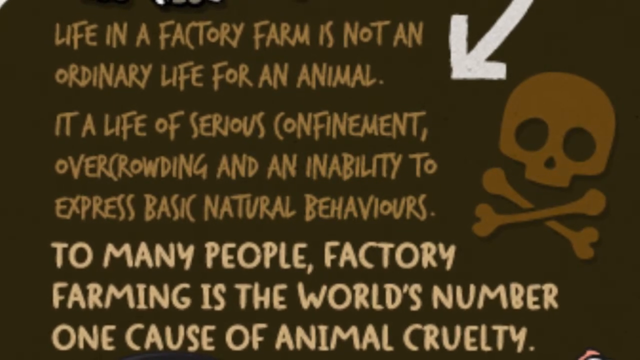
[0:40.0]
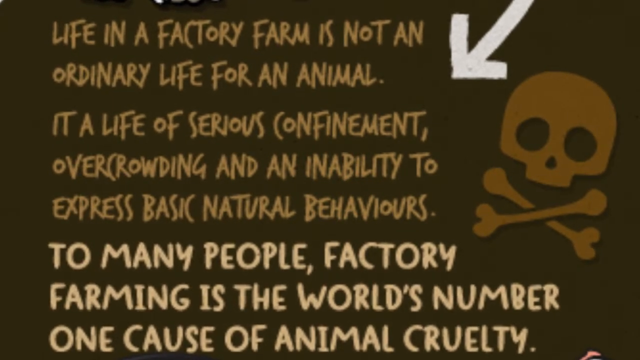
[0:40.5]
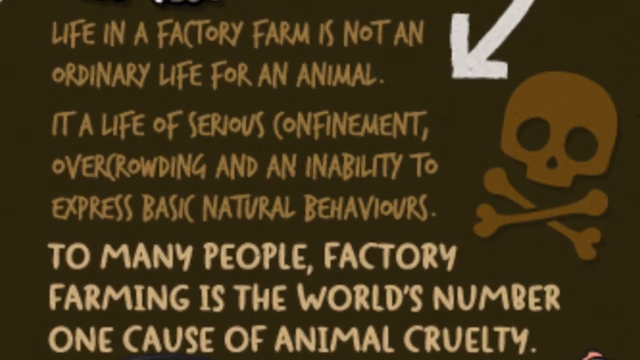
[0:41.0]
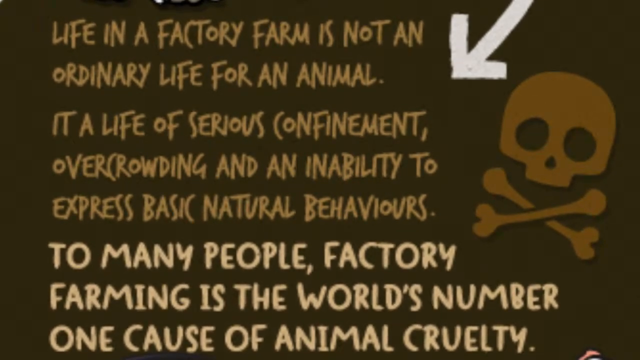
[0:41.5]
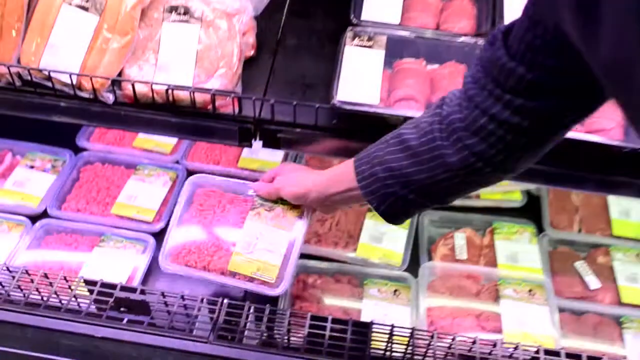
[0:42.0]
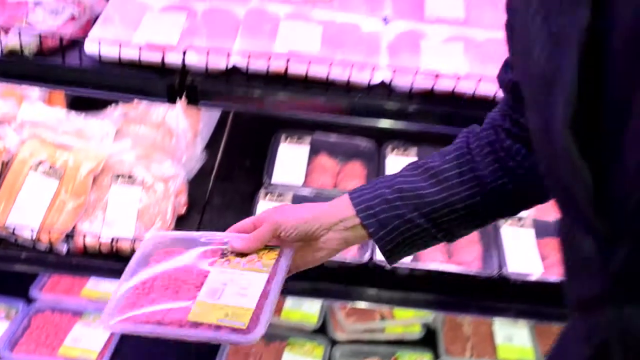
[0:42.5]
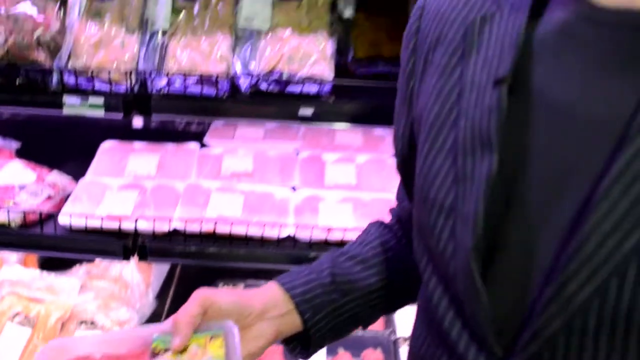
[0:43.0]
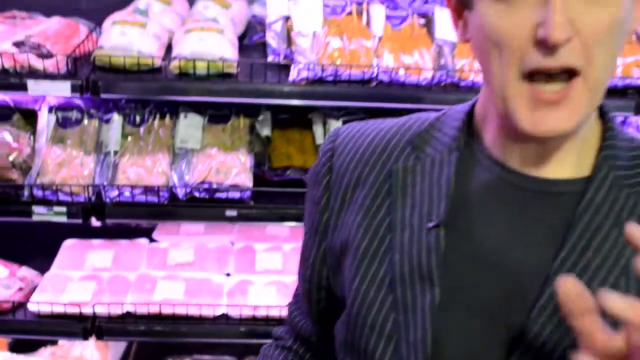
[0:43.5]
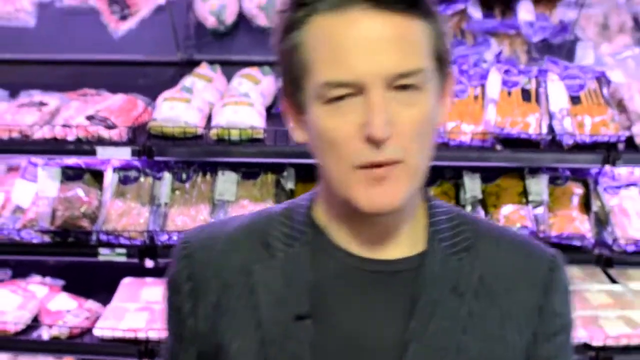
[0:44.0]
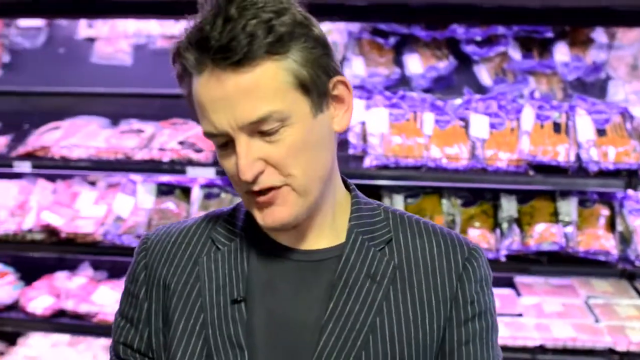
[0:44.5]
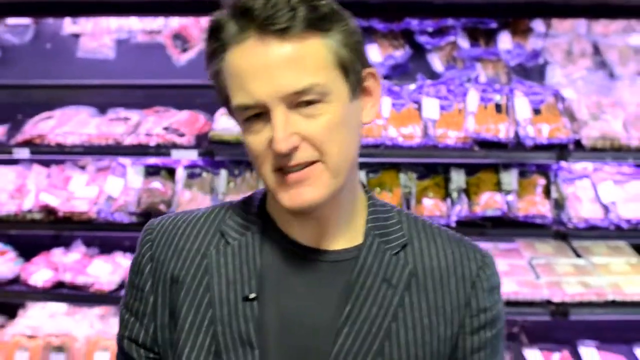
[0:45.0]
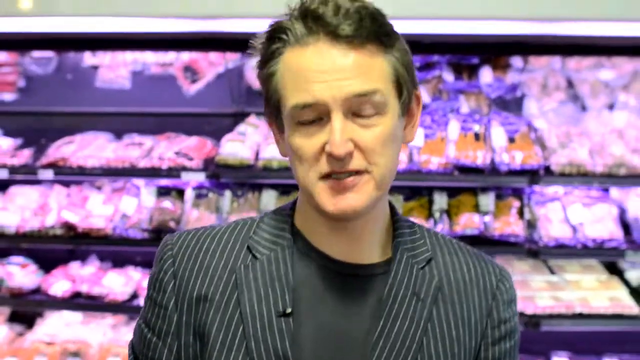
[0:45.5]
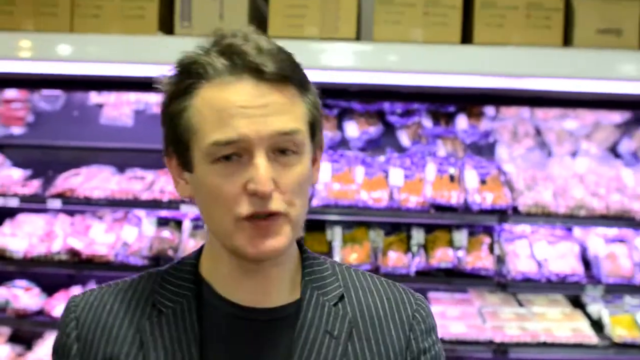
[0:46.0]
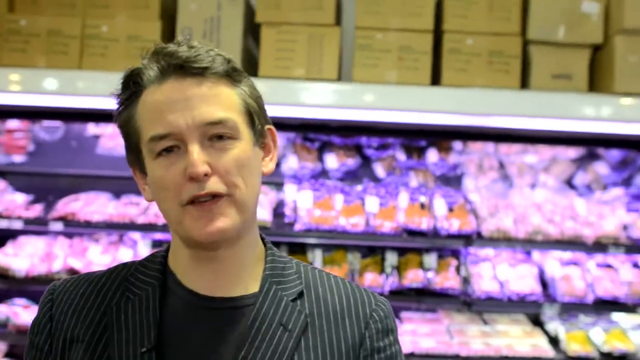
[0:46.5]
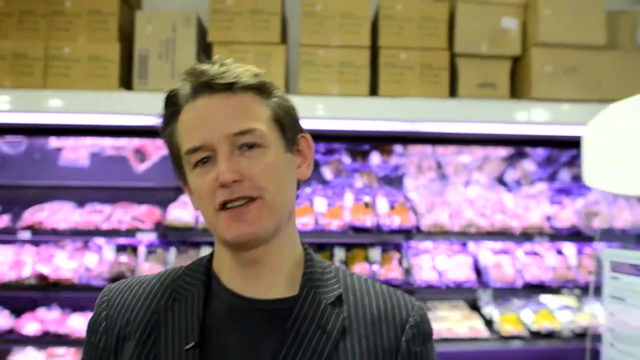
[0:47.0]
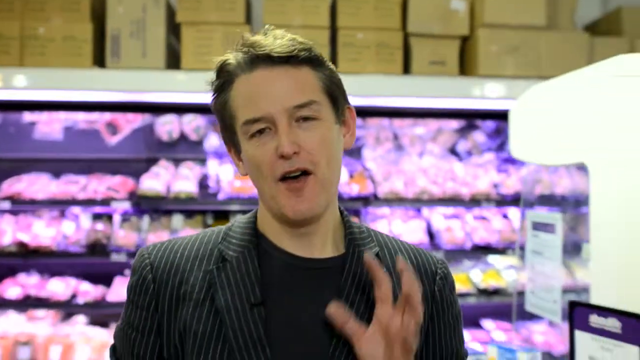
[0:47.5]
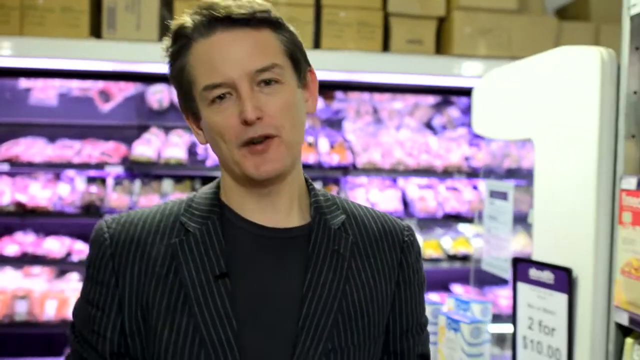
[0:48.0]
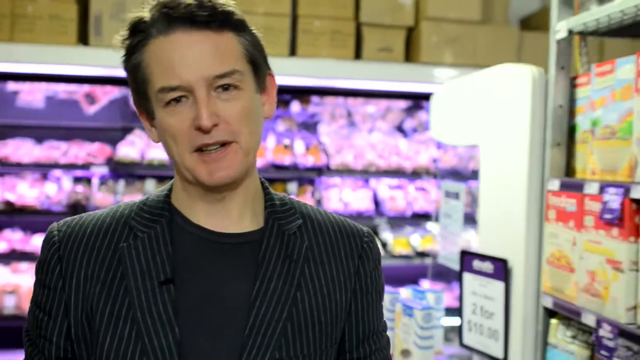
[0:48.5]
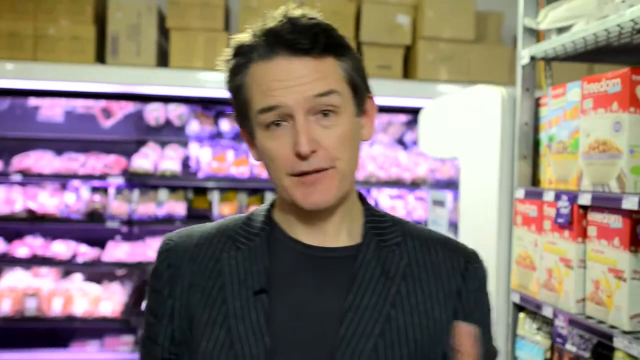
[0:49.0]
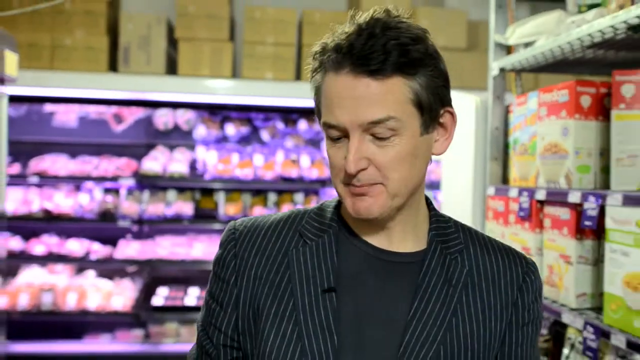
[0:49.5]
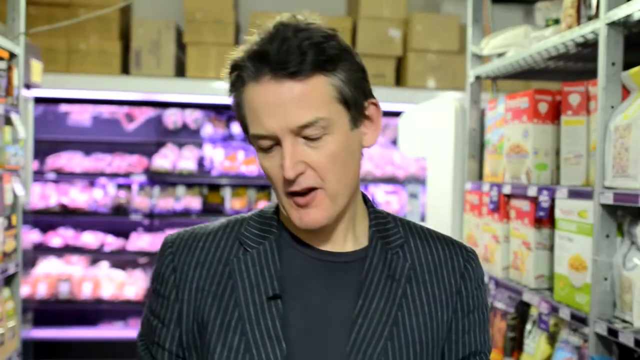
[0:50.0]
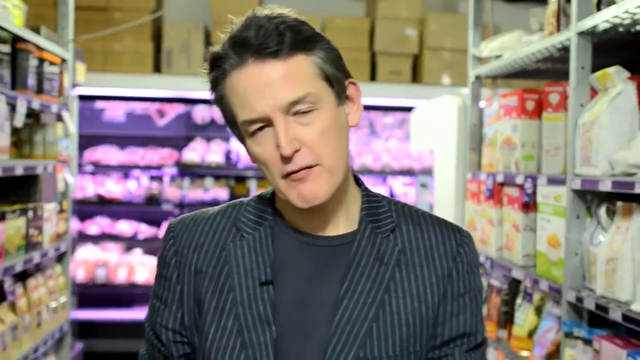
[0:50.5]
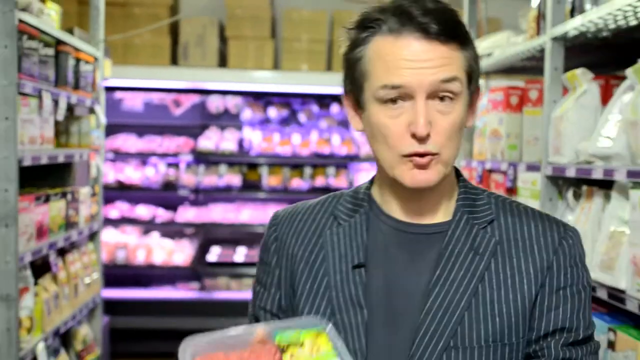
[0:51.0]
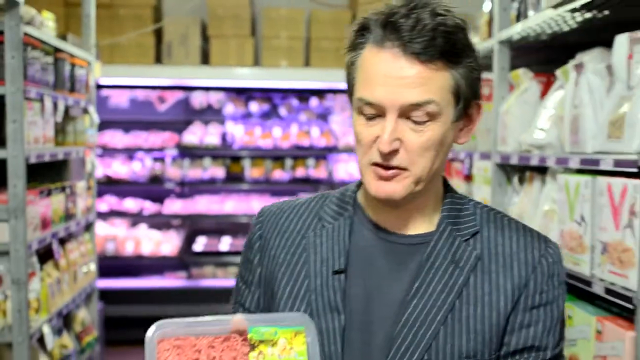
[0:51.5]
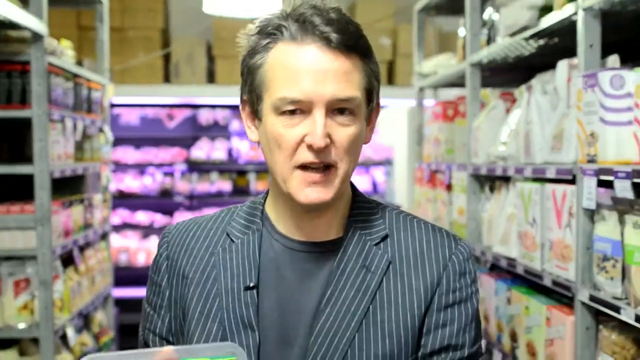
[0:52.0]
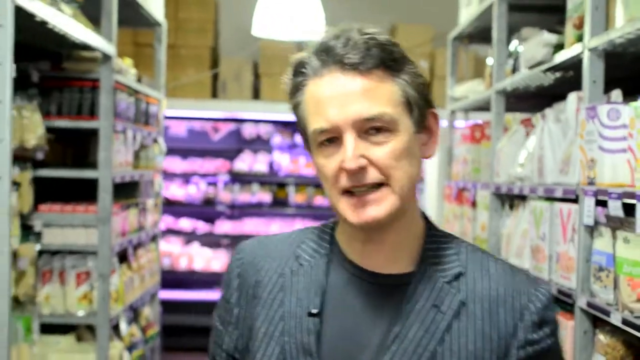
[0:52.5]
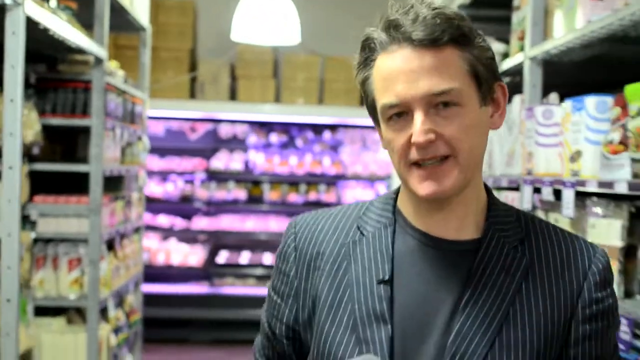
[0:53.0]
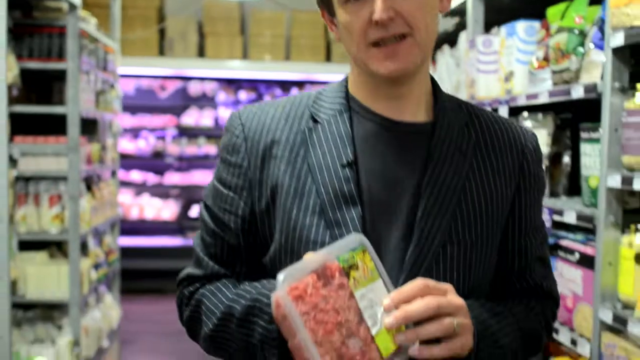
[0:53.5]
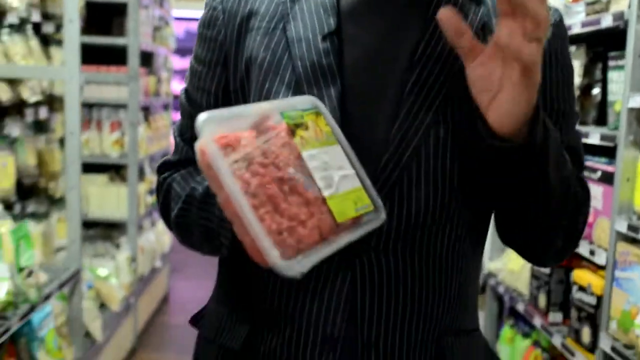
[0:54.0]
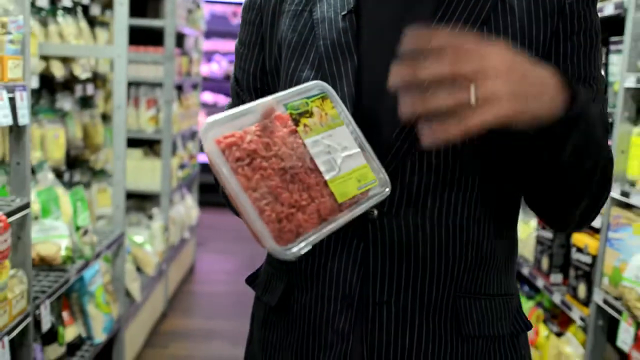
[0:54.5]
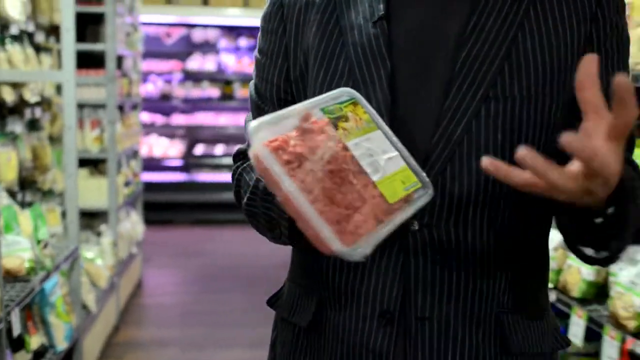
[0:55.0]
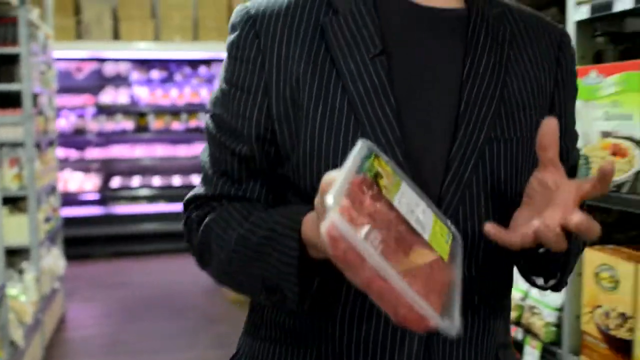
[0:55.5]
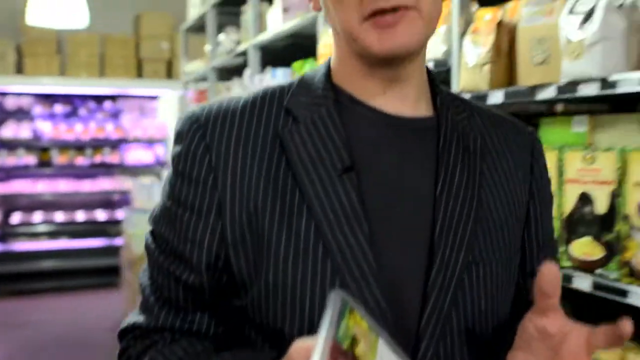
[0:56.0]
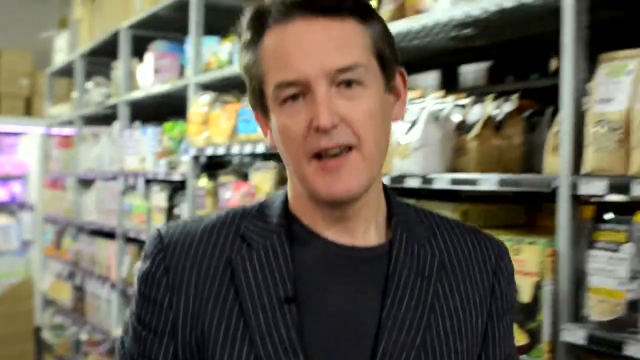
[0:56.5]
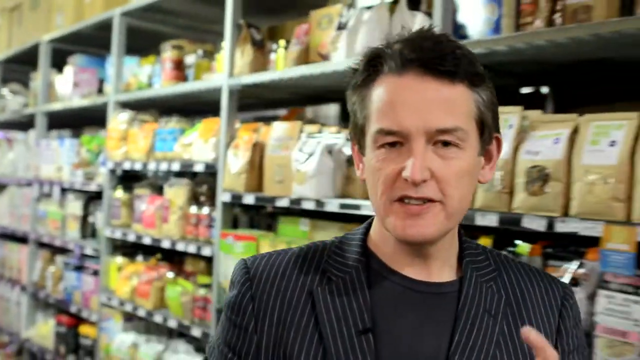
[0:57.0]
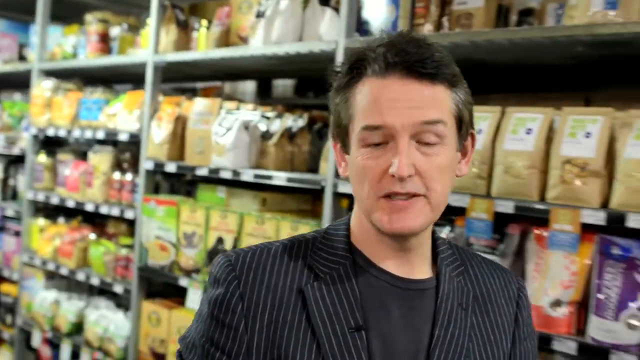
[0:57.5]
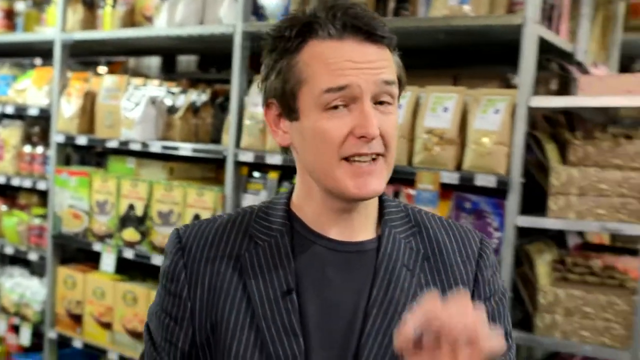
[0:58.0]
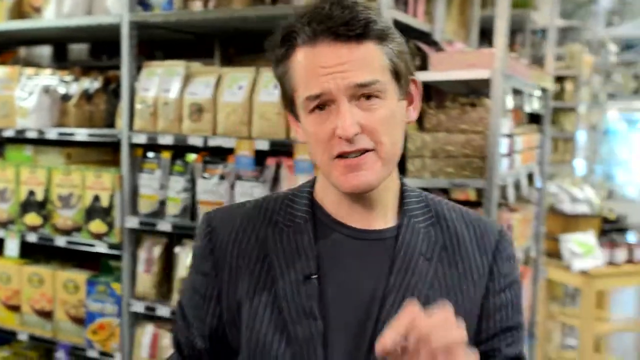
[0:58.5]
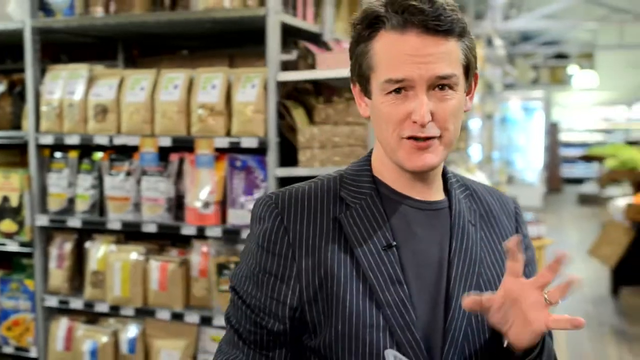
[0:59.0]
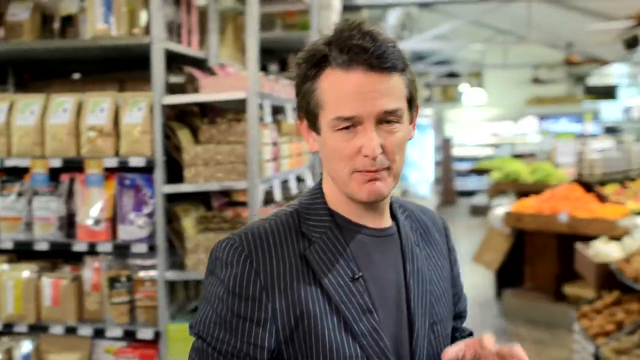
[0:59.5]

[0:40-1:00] A brown background appears with words written on it in a lighter brown: "life in a factory farm is not an ordinary life for an animal it's a life of serious confinement overcrowding and an inability to express basic natural behaviors to many people factory farming is the world's number one cause of animal cruelty". To the right of the words there is a skull, with bones in the pattern of an X under it. The scene transitions to the host picking up a packaged meat. The screen zooms out to show the host standing in front of the meat aisle, and as the camera zooms out, boxes can be seen on the top of the meat freezer. The host begins walking forward as he talks to the camera, continuing through another aisle where various products, which appear to be cereal, can be seen to his left and right.